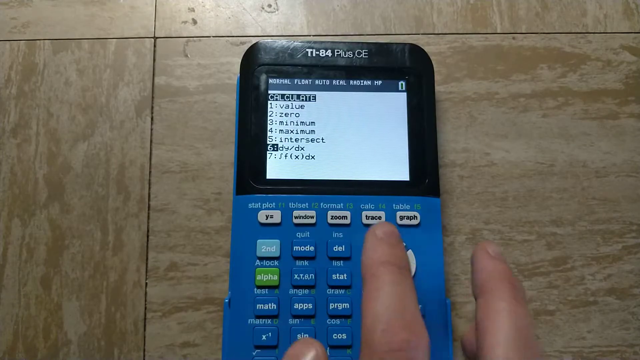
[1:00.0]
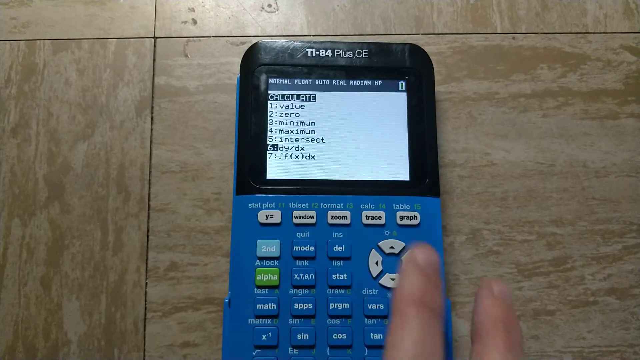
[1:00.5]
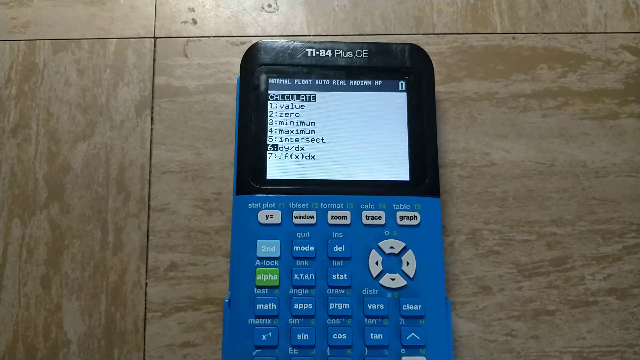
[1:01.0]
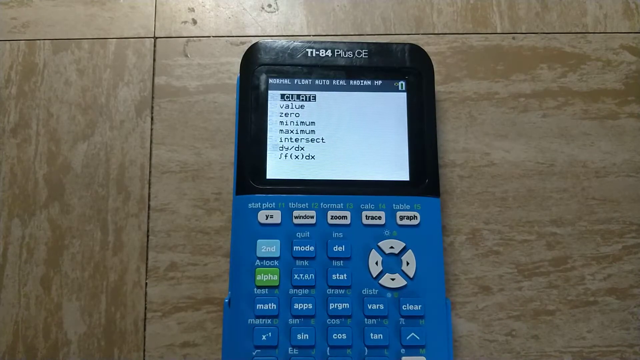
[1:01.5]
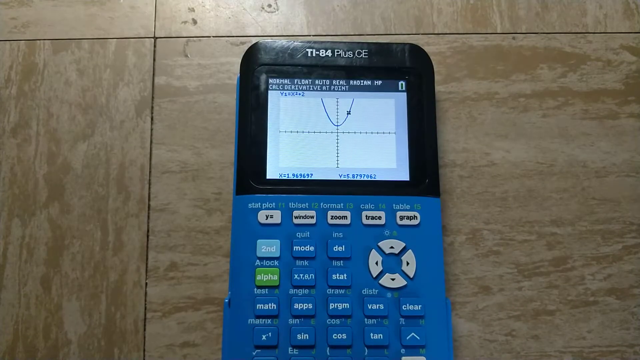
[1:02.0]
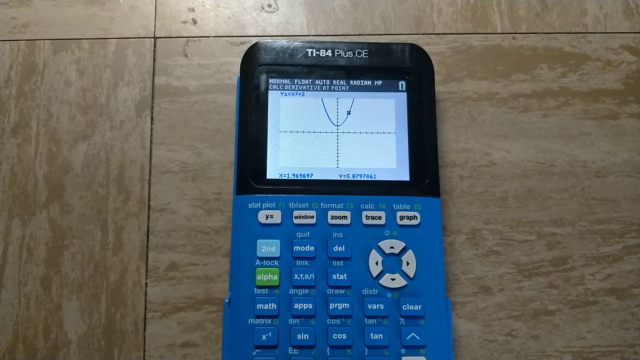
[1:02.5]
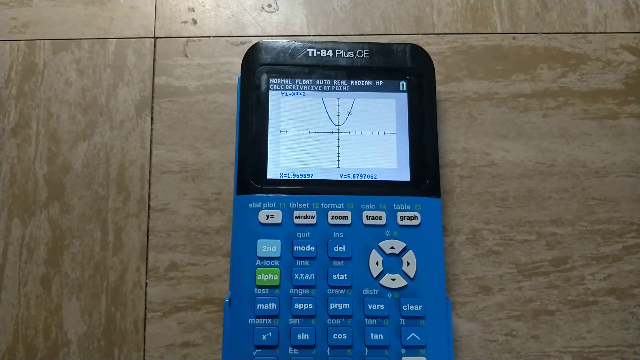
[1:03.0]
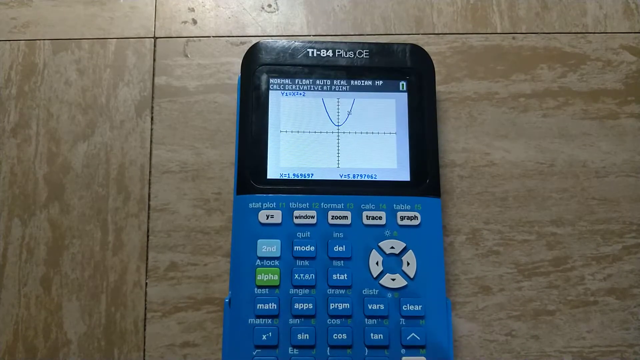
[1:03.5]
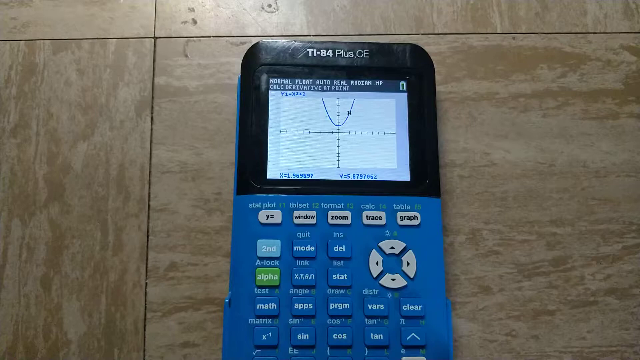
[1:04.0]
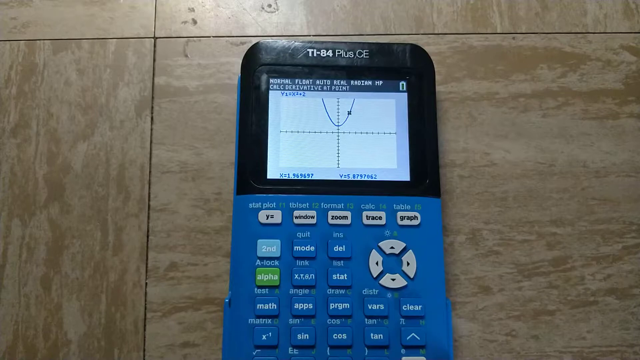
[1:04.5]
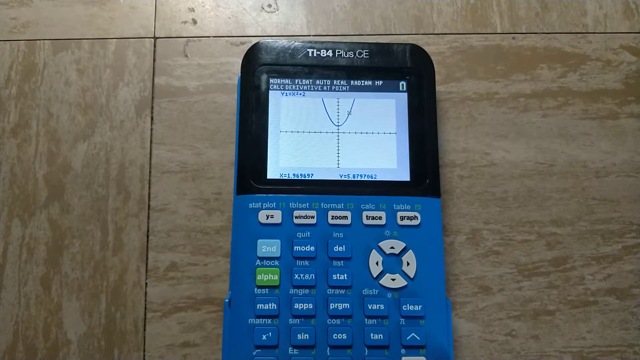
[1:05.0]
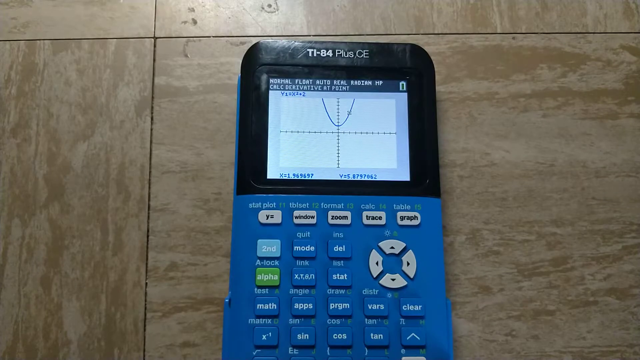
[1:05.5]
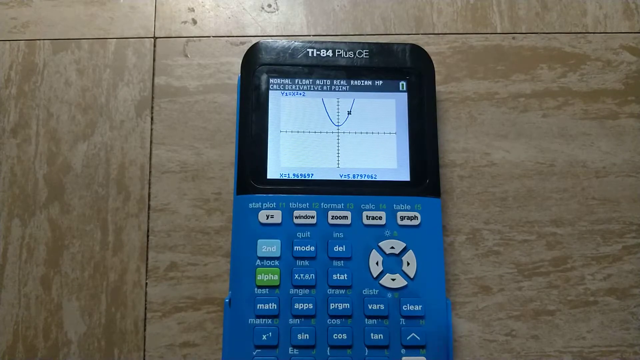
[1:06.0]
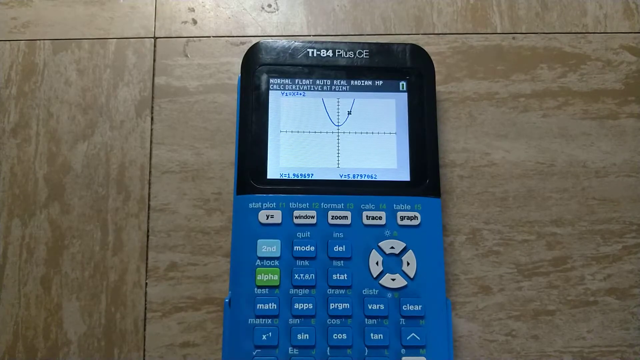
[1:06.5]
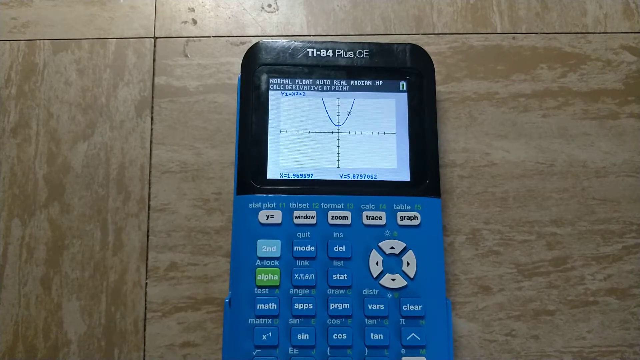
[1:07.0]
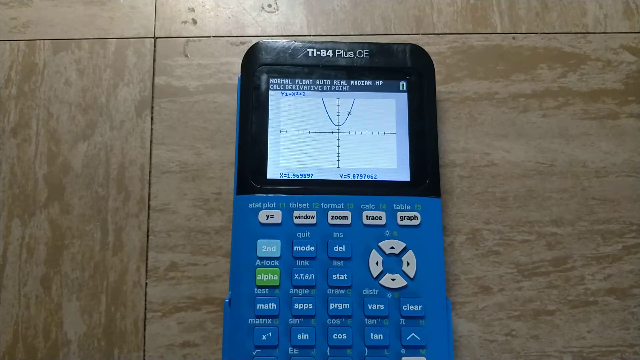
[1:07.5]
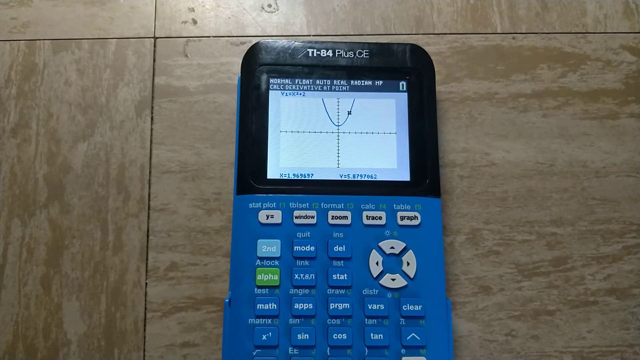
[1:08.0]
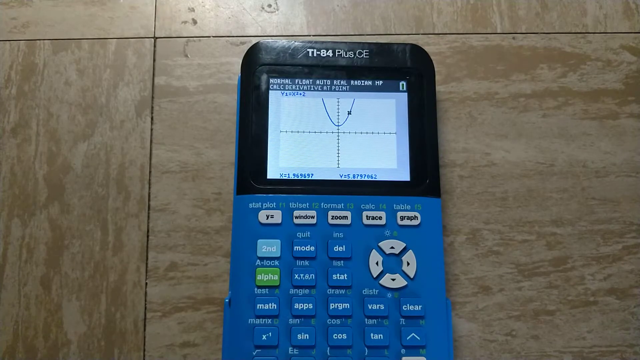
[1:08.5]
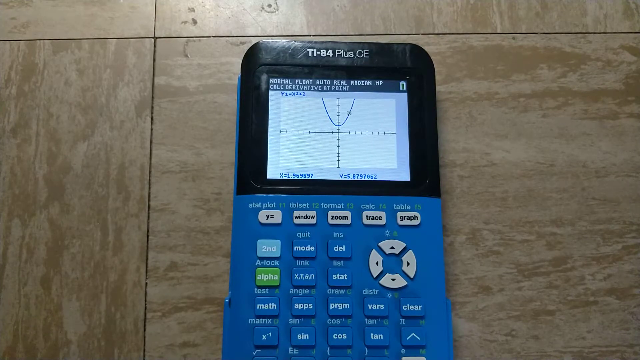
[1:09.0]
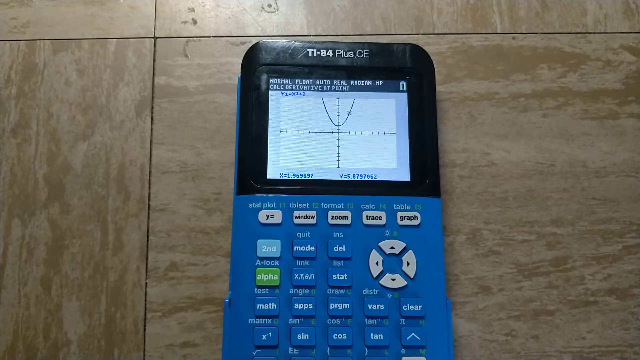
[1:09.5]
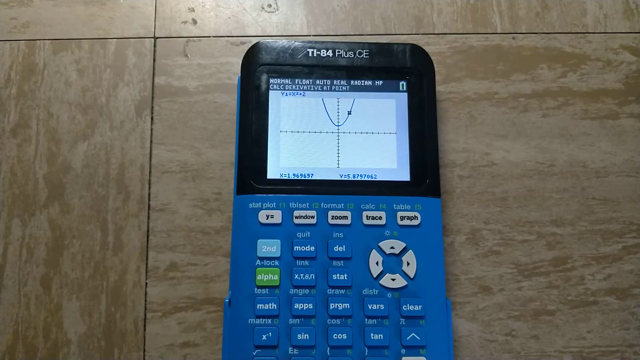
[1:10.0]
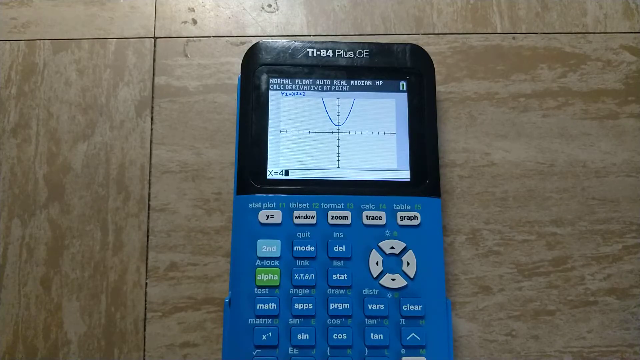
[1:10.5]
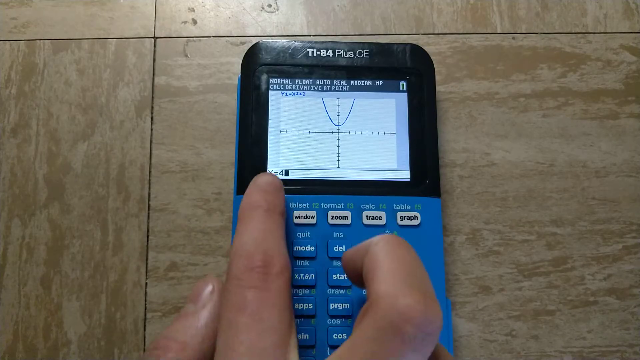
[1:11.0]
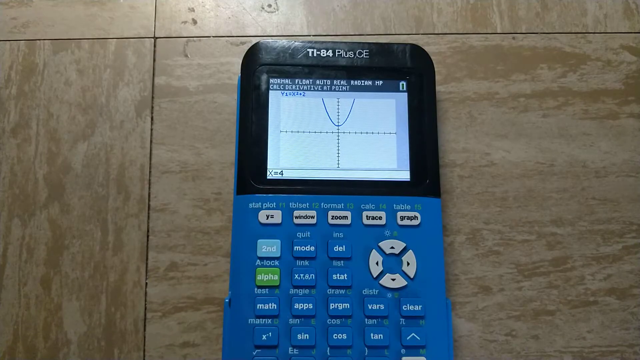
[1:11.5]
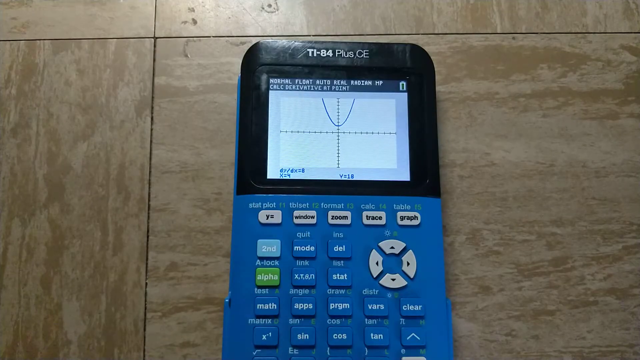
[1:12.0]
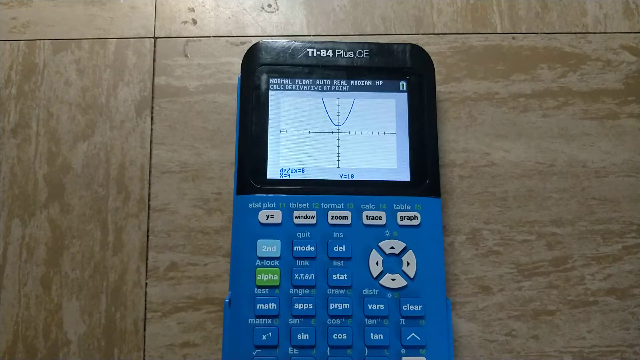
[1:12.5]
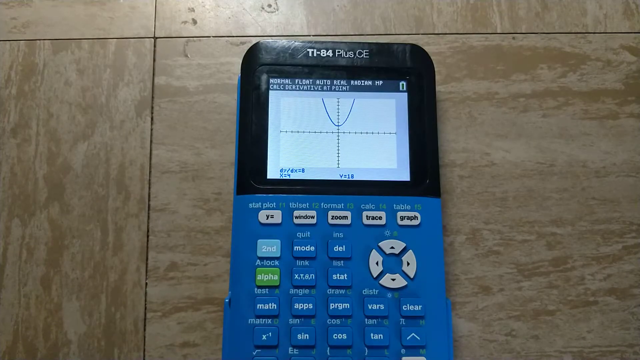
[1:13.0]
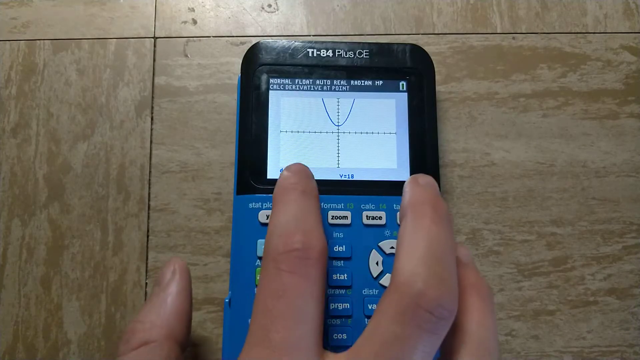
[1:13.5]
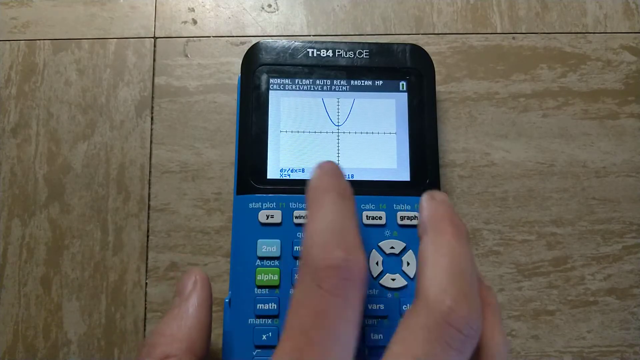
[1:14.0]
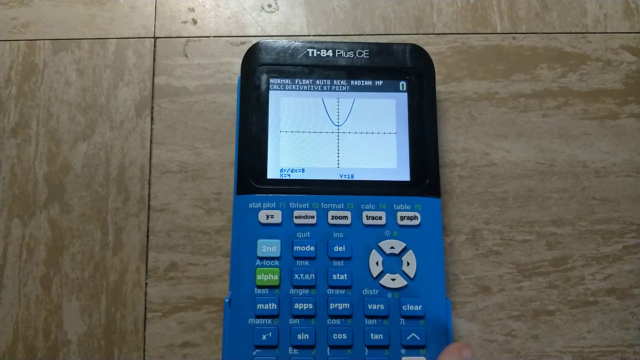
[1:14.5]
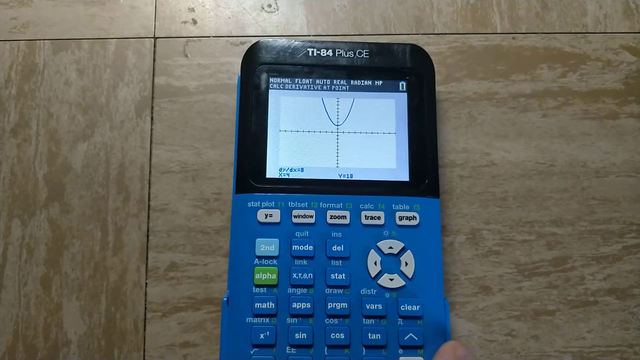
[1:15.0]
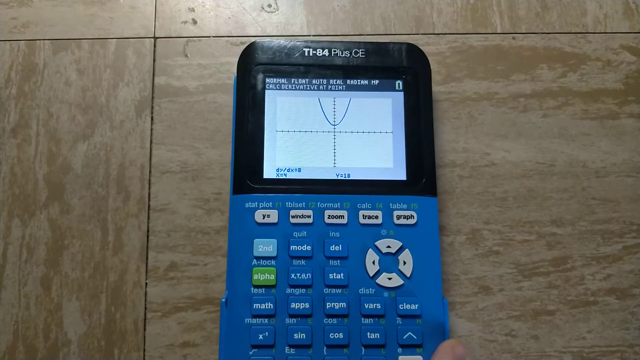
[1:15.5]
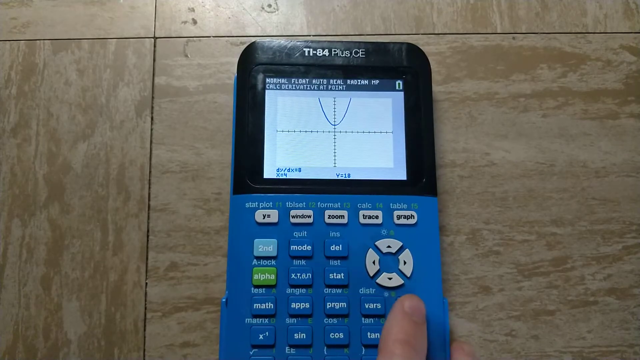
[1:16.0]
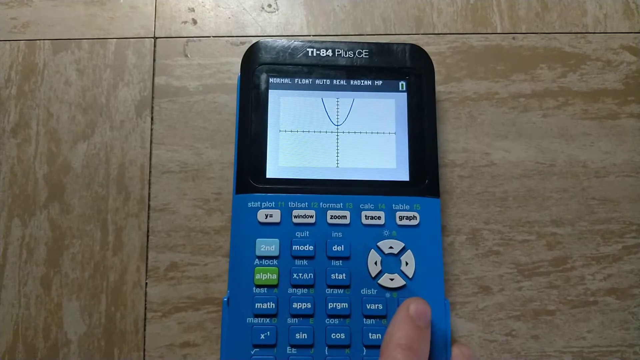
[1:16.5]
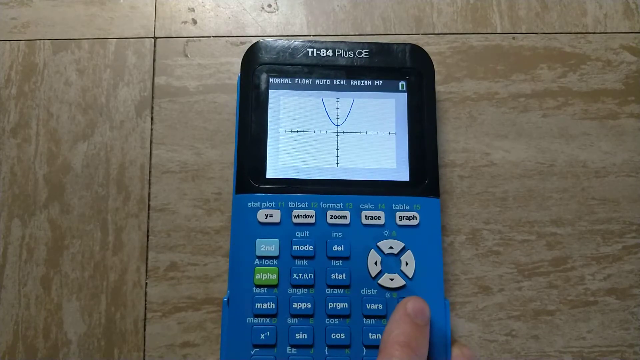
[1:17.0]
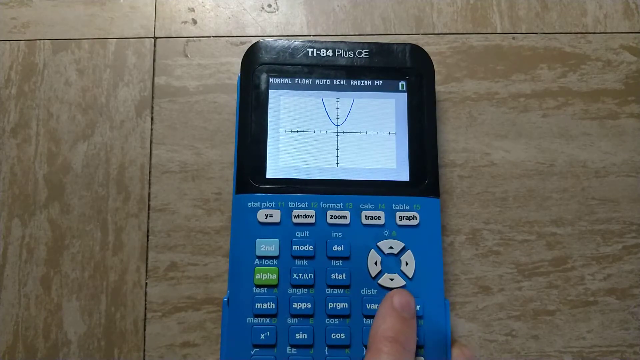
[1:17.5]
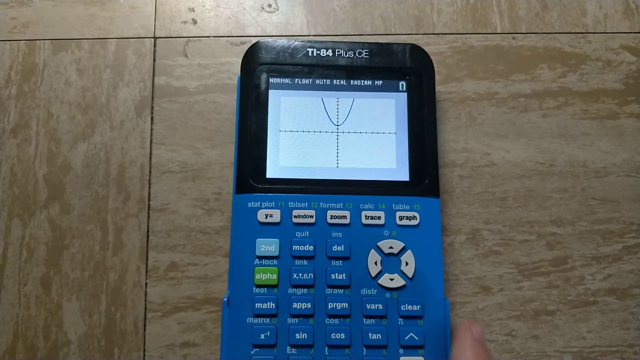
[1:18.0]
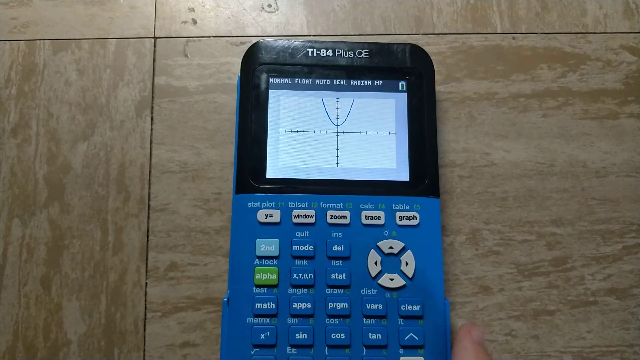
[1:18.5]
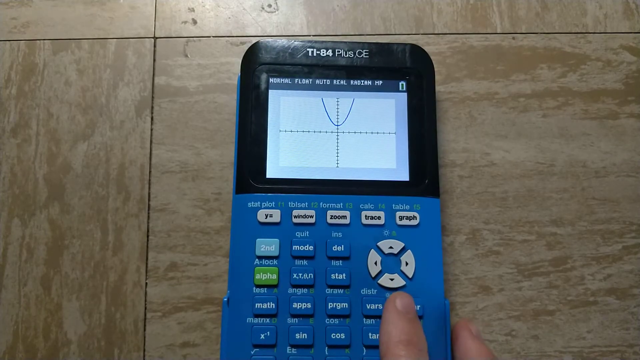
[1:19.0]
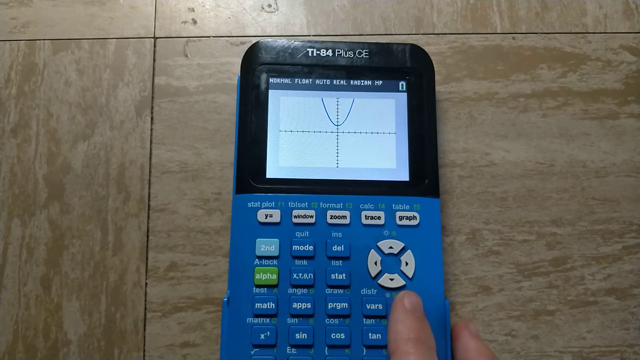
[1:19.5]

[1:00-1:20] A calculator is placed down on the floor with its screen facing the camera. A hand is busy pressing its buttons, maybe calculating something. Something like a graph appears on the screen, and the calculator looks like a smartphone. It is black and blue, with gray and green on the buttons. The name written on it reads "IT" with the number "84 plus CE". When the hand presses the buttons, results appear on the screen.